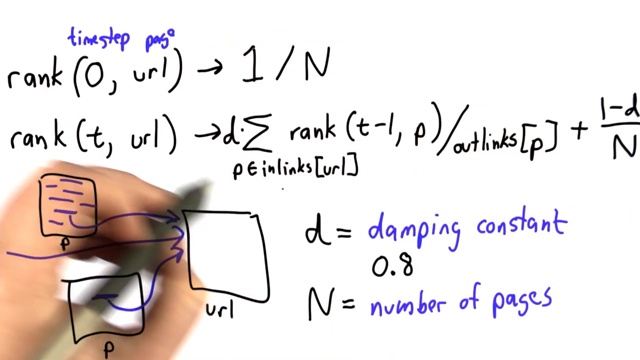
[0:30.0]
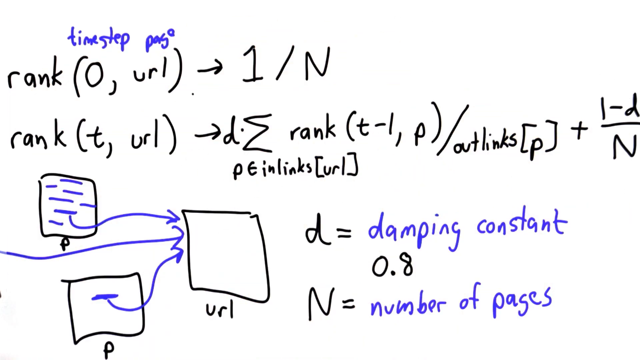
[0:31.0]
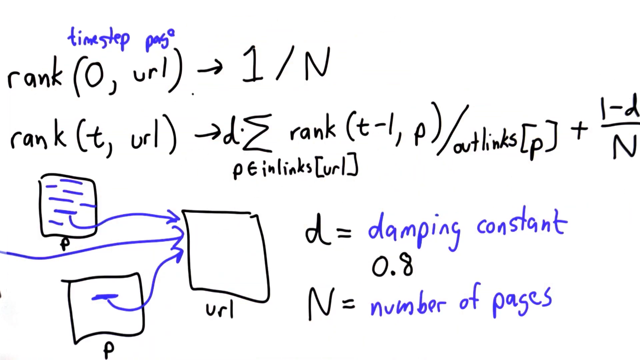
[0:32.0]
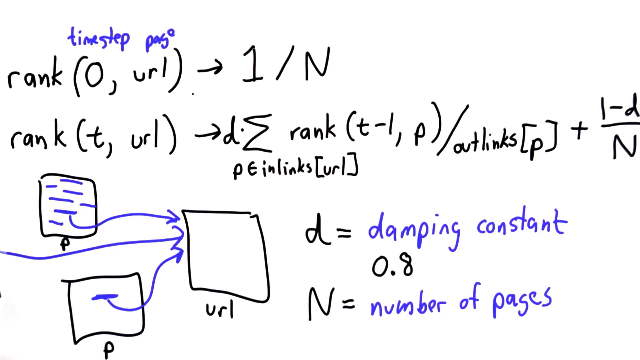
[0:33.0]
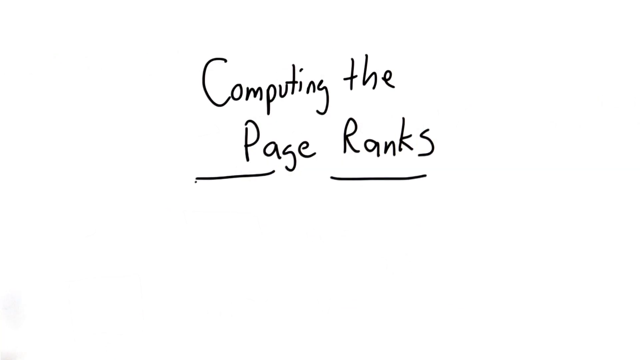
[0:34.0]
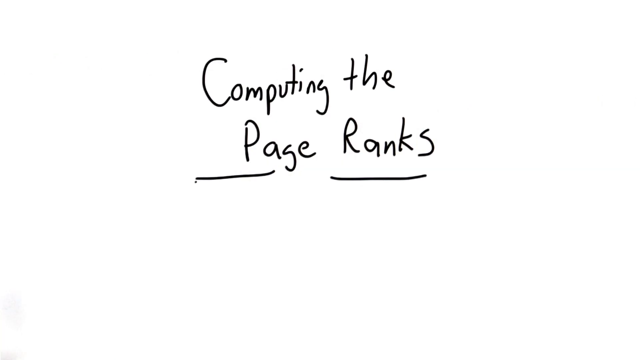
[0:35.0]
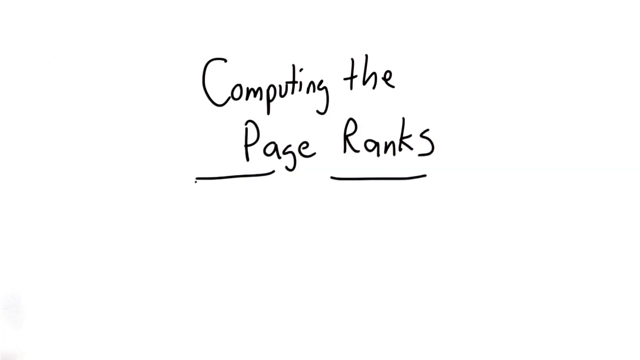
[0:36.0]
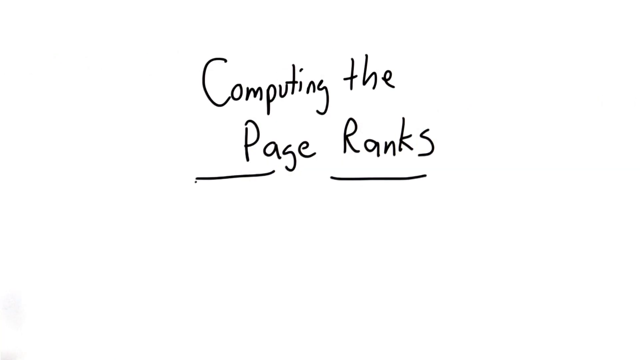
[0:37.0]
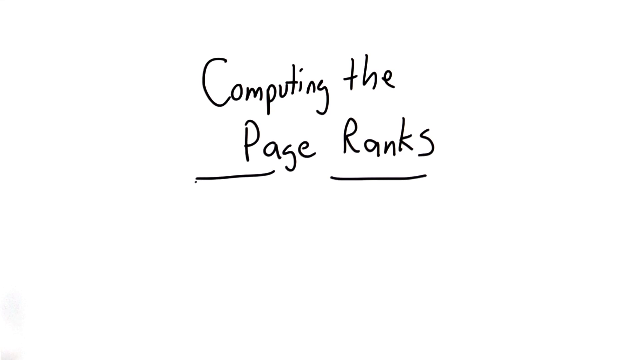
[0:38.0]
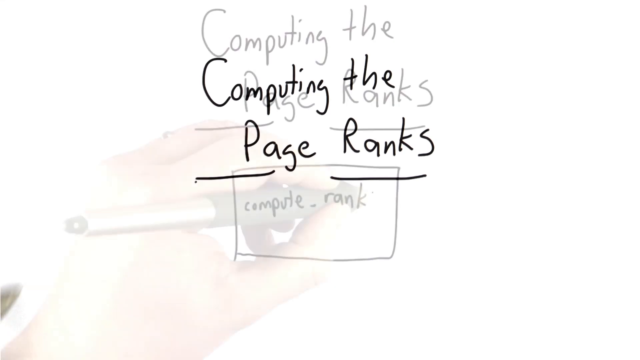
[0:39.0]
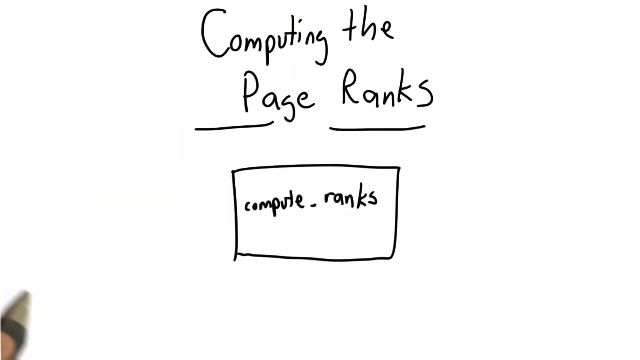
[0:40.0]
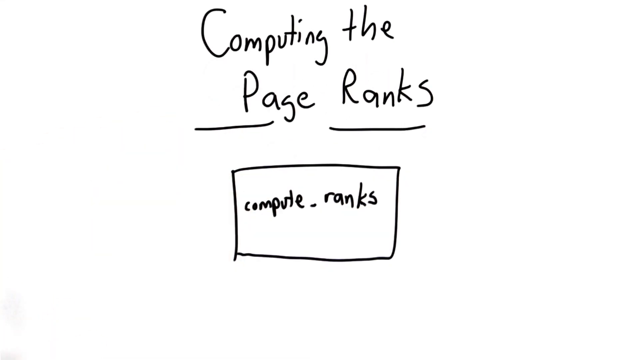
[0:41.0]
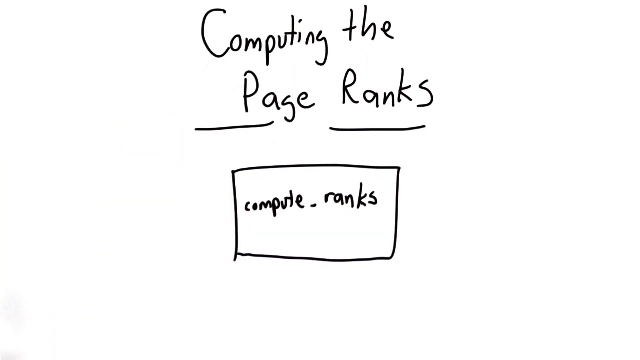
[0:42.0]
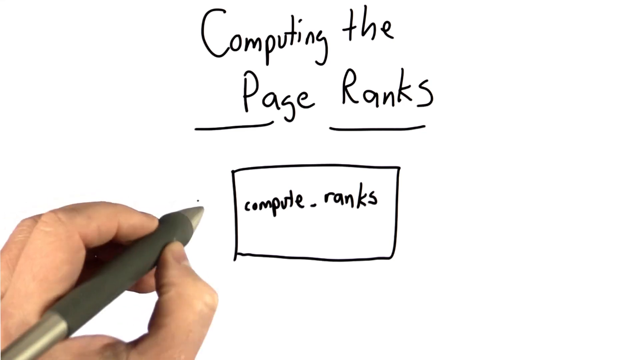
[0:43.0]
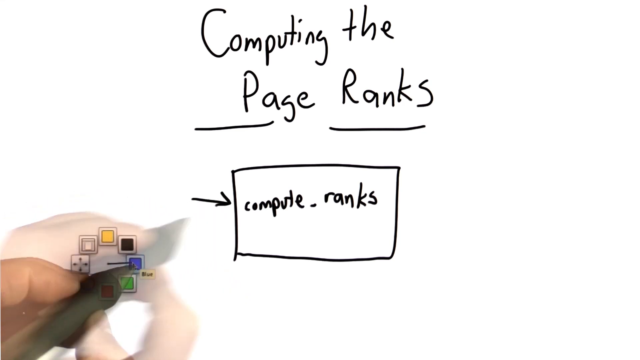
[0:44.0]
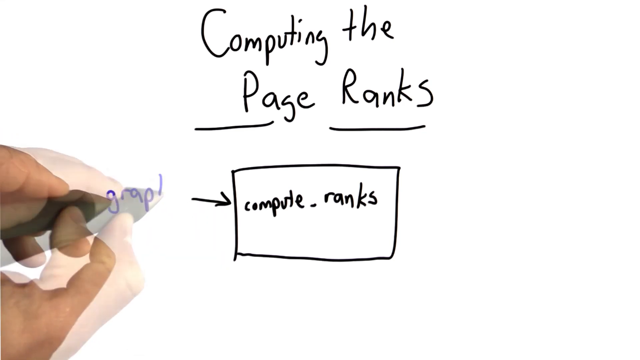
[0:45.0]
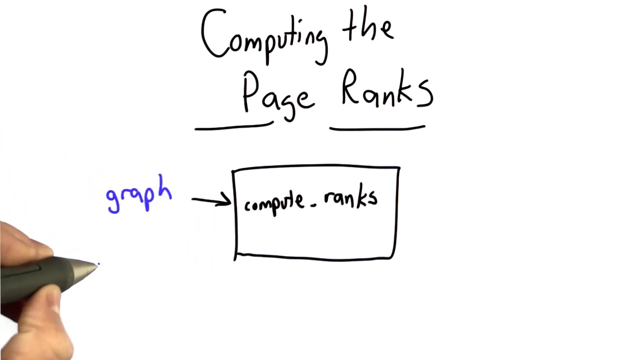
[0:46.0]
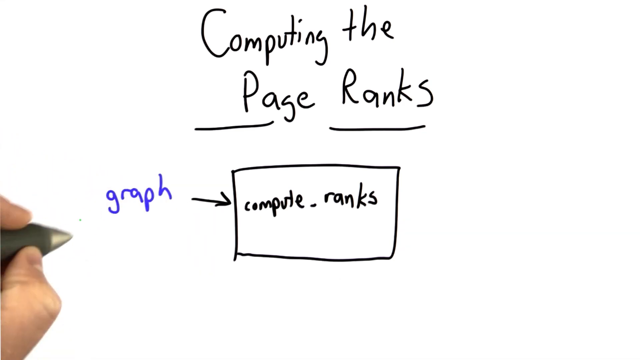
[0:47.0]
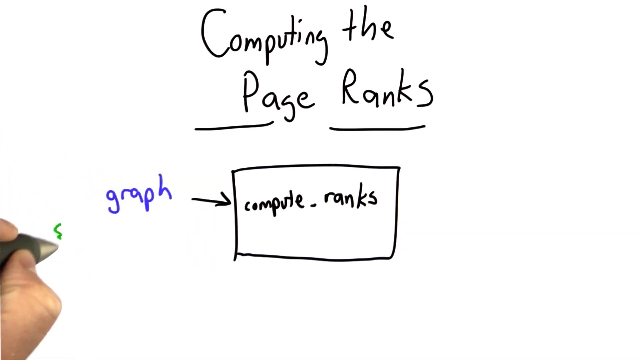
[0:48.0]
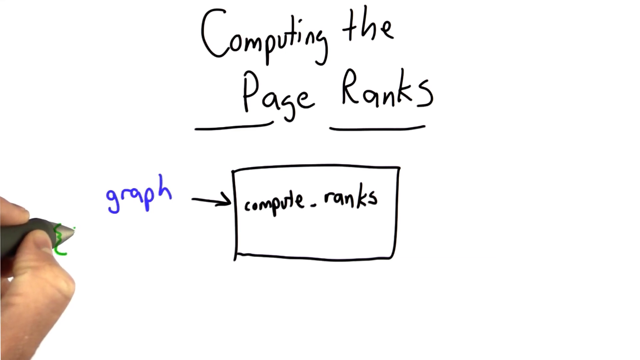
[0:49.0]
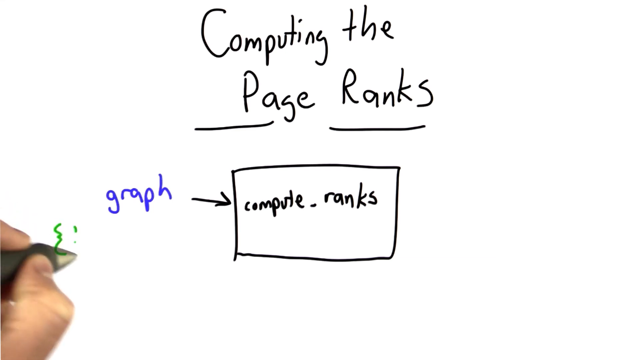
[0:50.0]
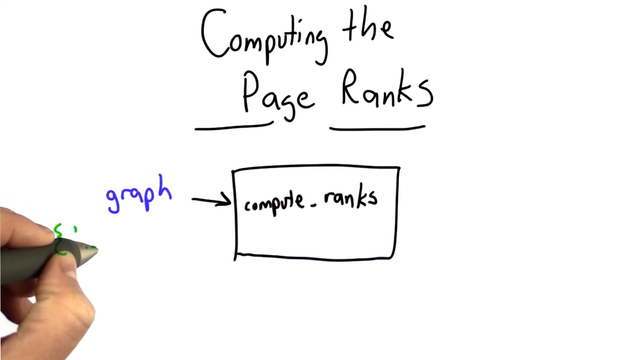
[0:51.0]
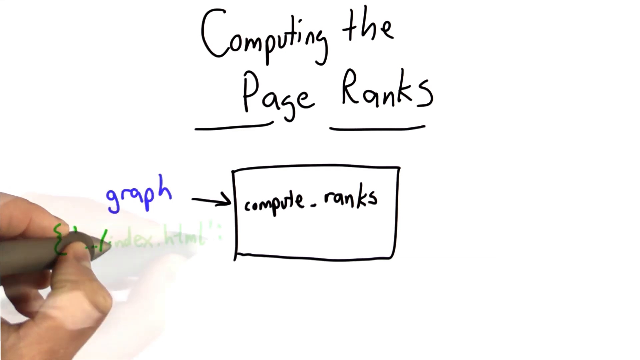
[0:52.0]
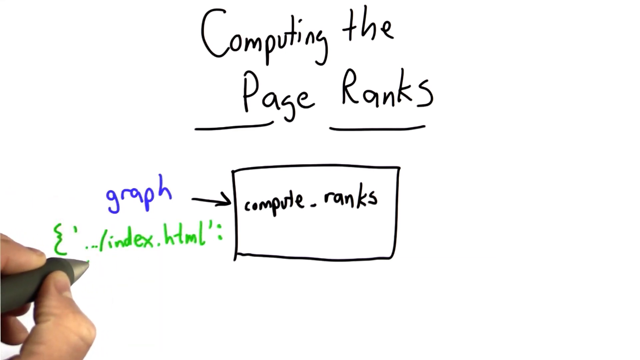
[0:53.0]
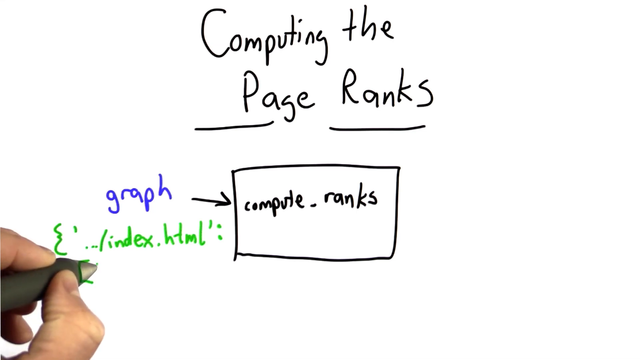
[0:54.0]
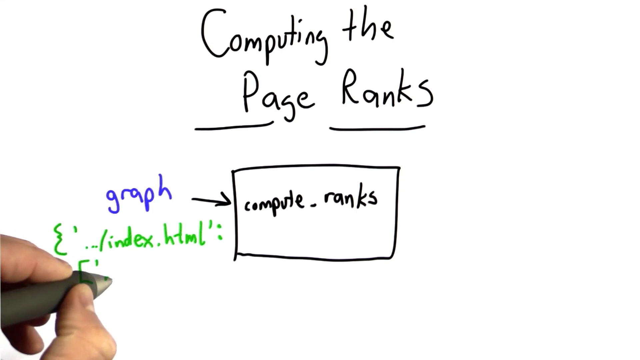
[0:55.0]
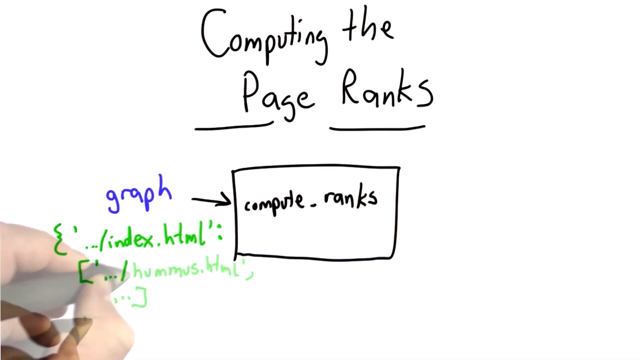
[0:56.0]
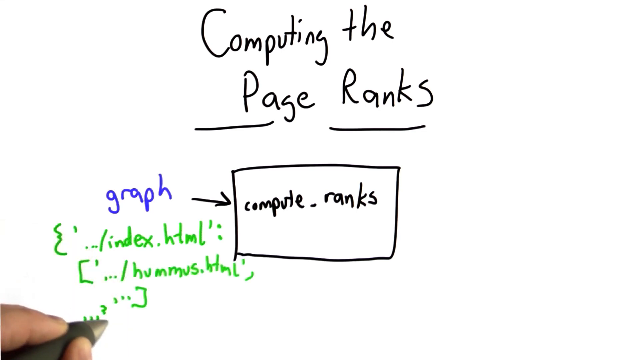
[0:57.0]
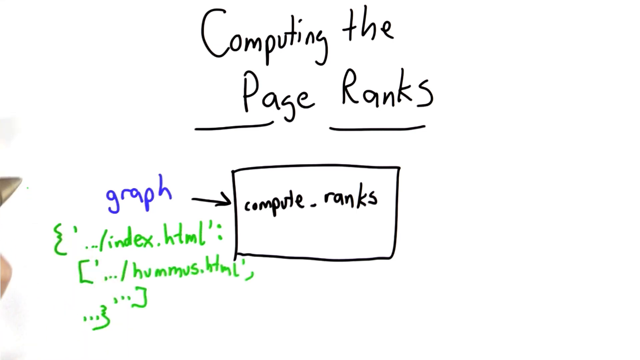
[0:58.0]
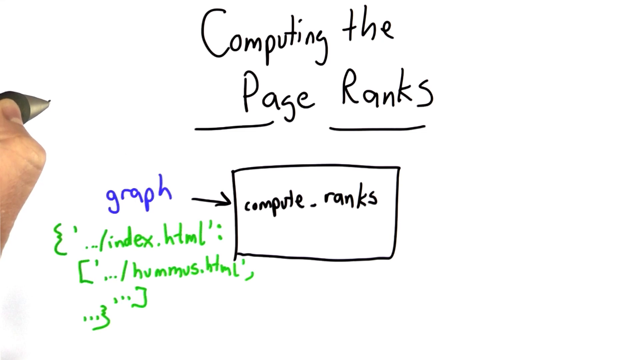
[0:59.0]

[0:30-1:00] The heading changes to "Computing the Page Ranks." The hand disappears and reappears. A large square is drawn in the frame with "Compute Ranks" handwritten in it. It looks like a blackboard where a class is being taught. A special pen is used to draw a line. Some code instructions are placed inside a notebook, and the pen writes a little more above.